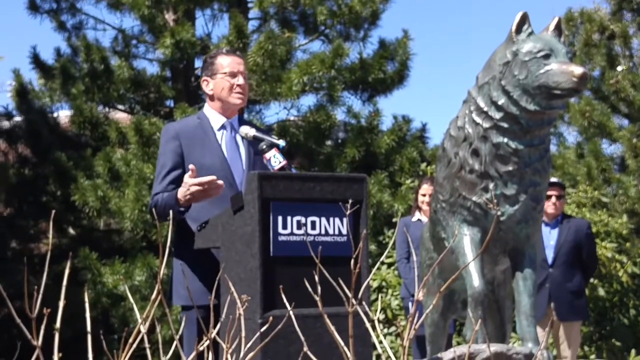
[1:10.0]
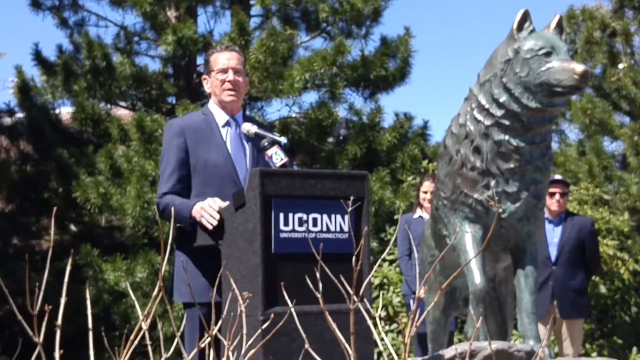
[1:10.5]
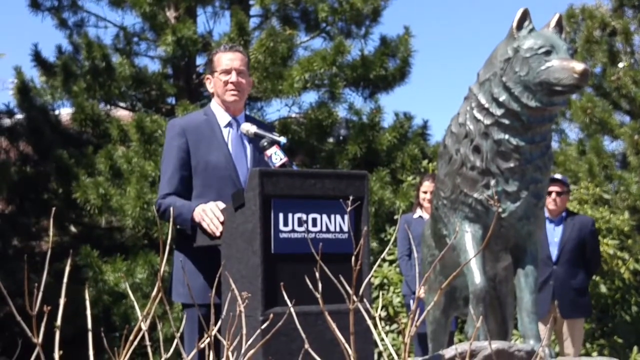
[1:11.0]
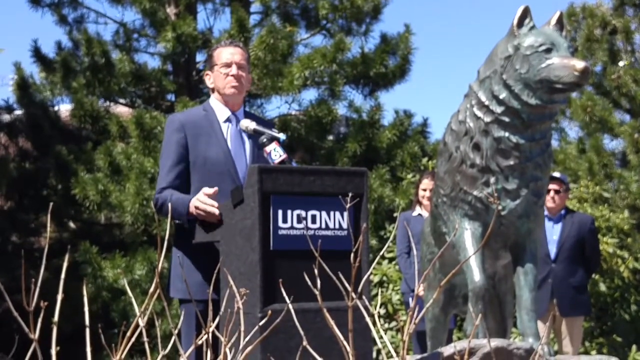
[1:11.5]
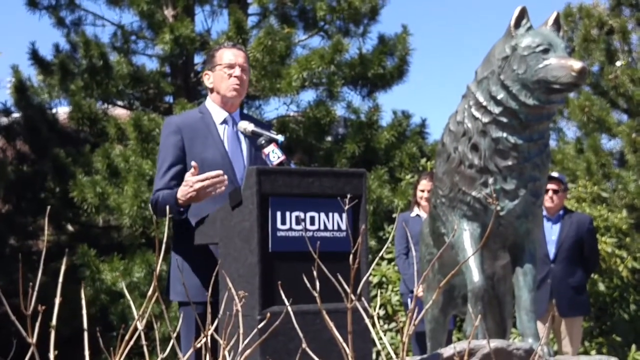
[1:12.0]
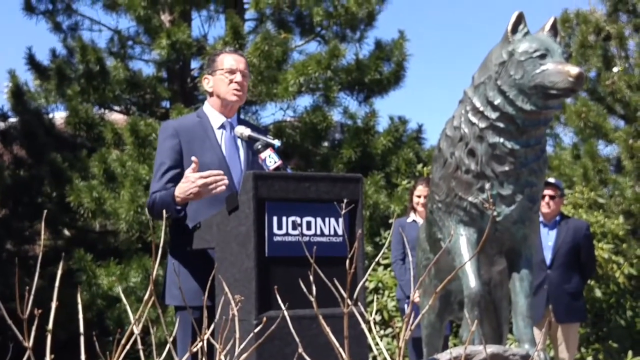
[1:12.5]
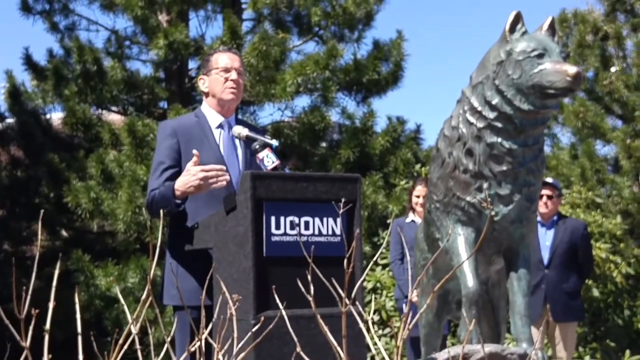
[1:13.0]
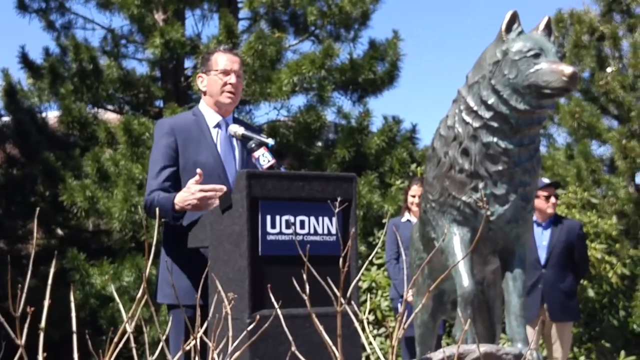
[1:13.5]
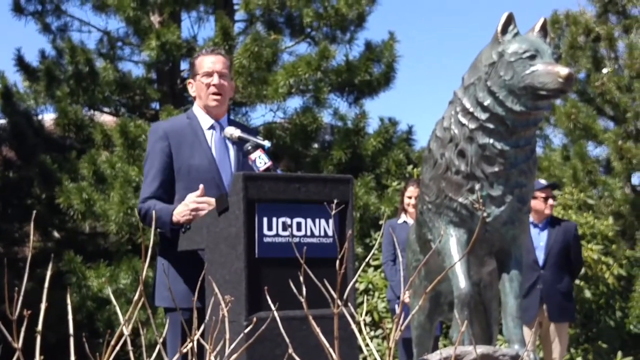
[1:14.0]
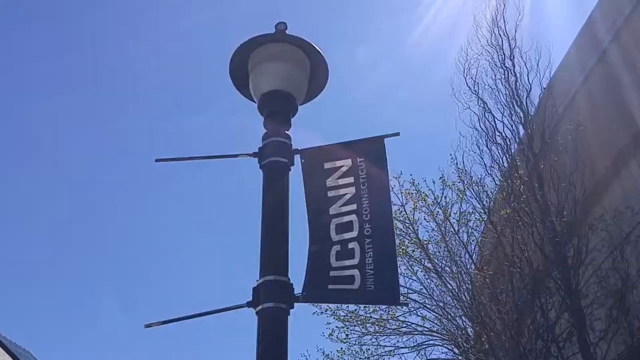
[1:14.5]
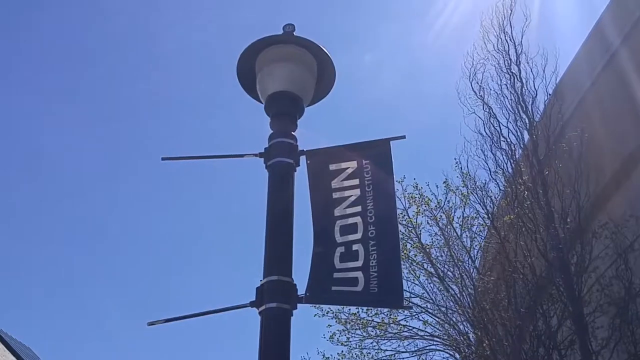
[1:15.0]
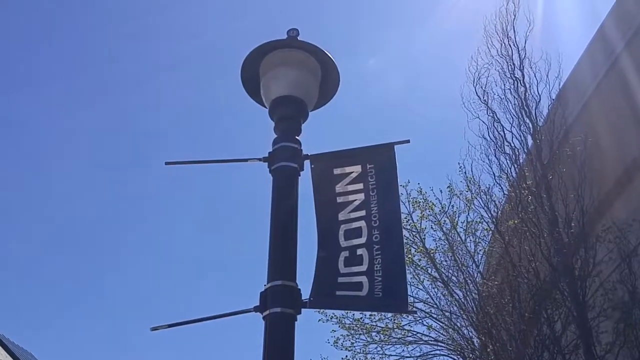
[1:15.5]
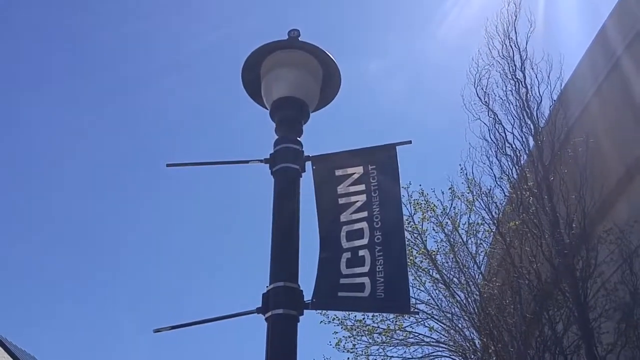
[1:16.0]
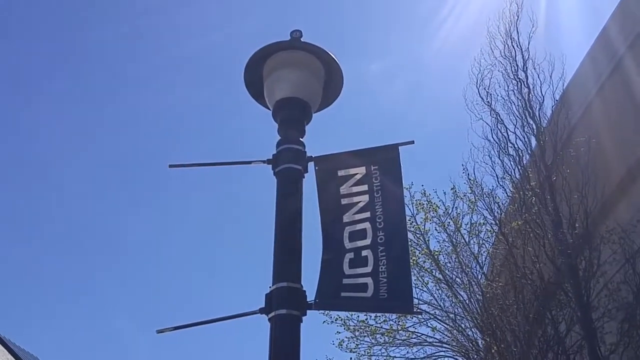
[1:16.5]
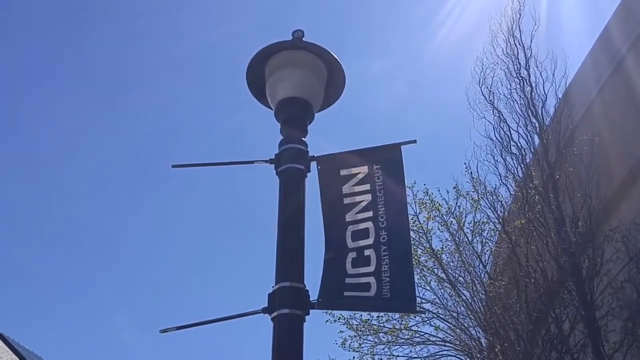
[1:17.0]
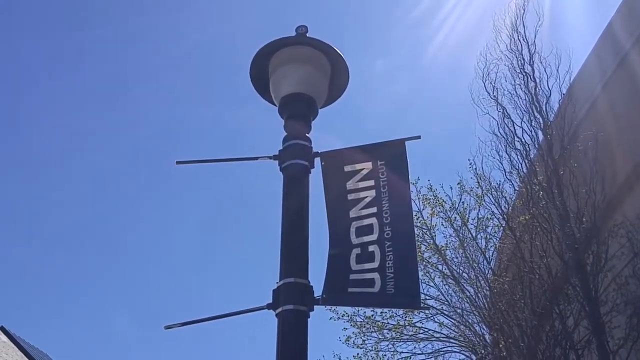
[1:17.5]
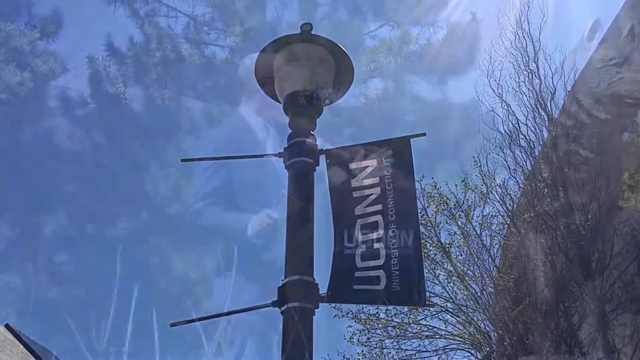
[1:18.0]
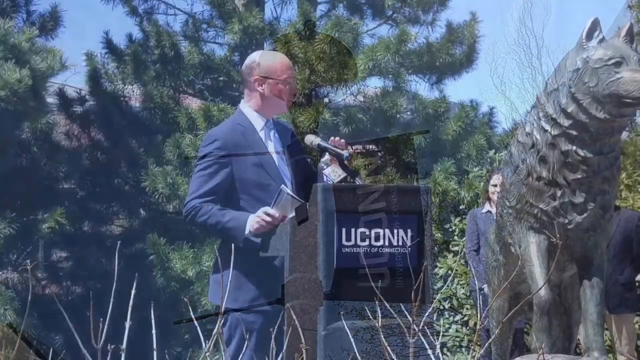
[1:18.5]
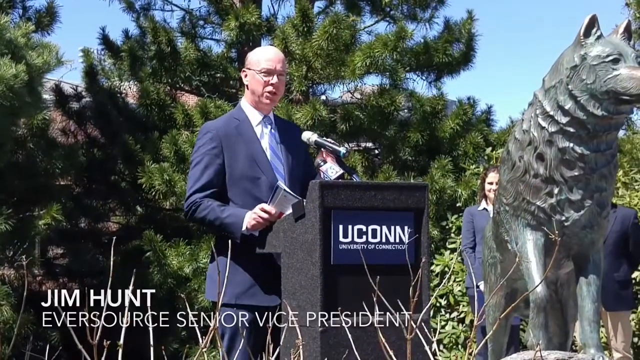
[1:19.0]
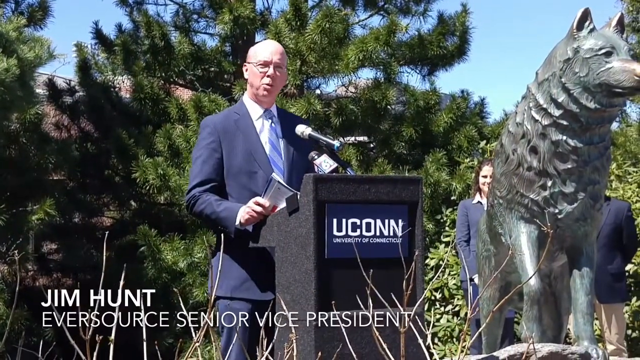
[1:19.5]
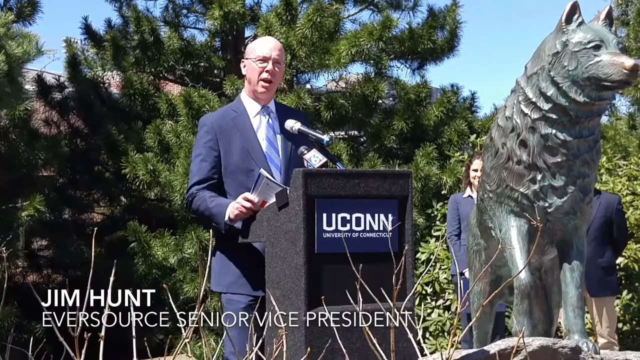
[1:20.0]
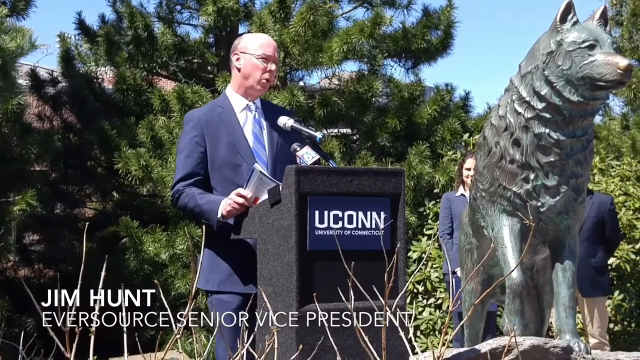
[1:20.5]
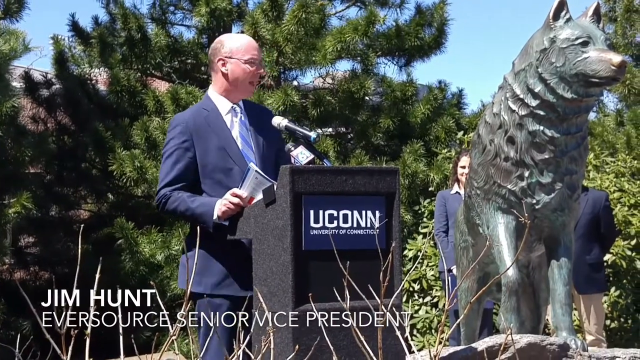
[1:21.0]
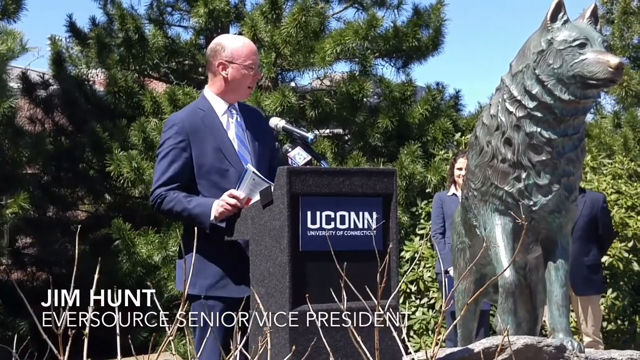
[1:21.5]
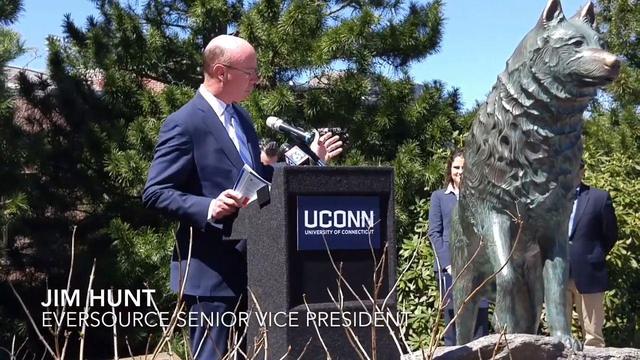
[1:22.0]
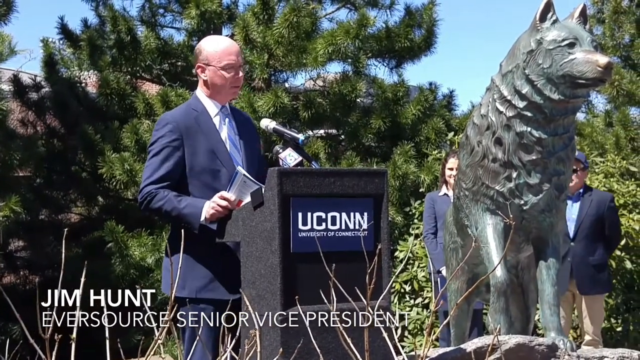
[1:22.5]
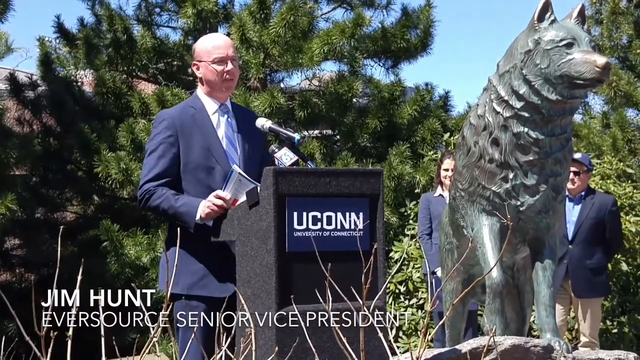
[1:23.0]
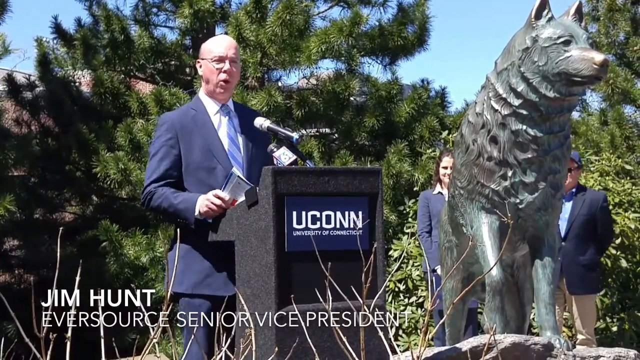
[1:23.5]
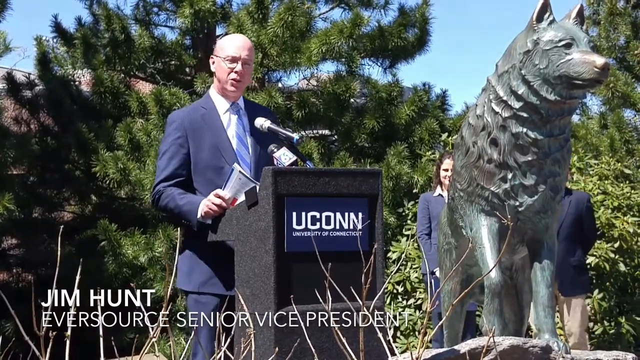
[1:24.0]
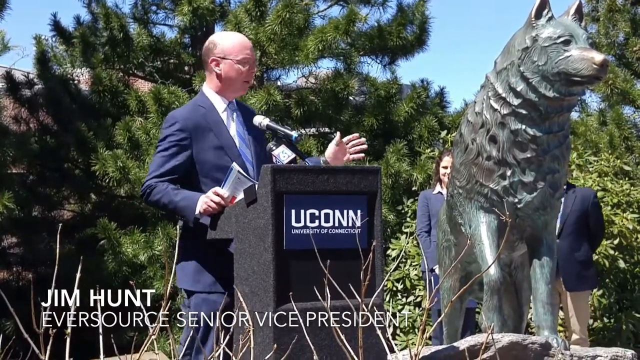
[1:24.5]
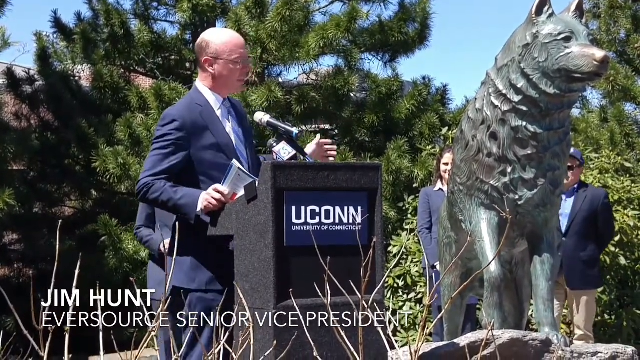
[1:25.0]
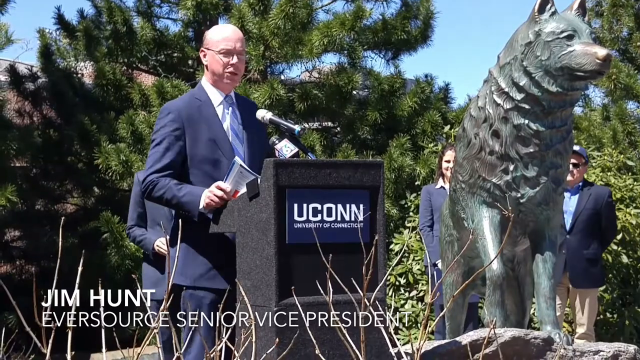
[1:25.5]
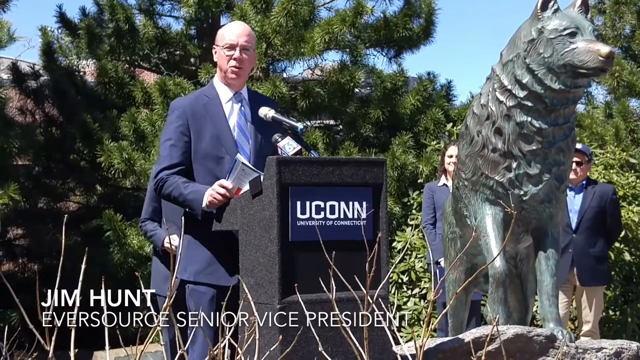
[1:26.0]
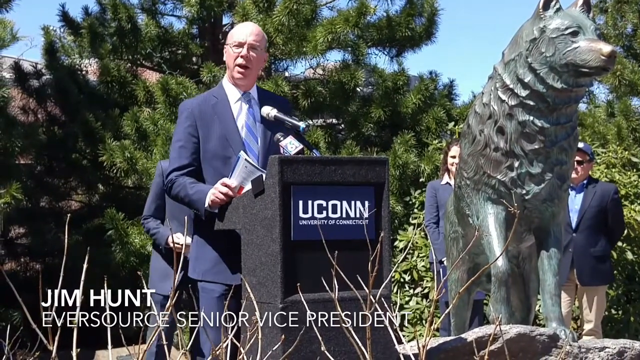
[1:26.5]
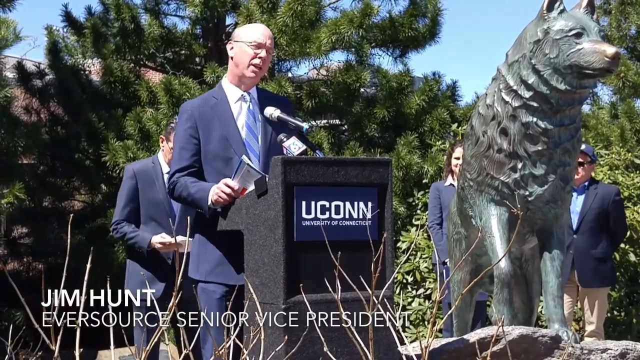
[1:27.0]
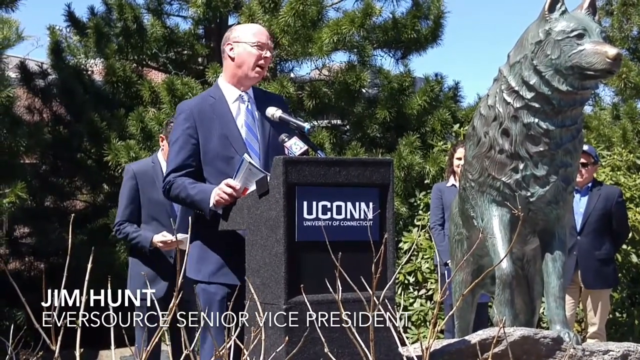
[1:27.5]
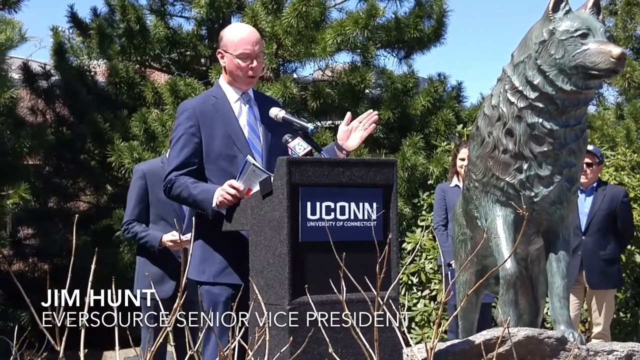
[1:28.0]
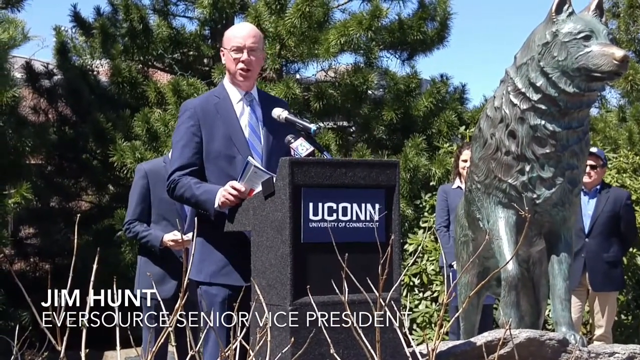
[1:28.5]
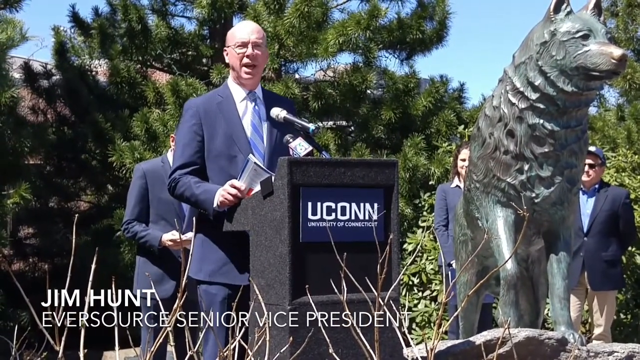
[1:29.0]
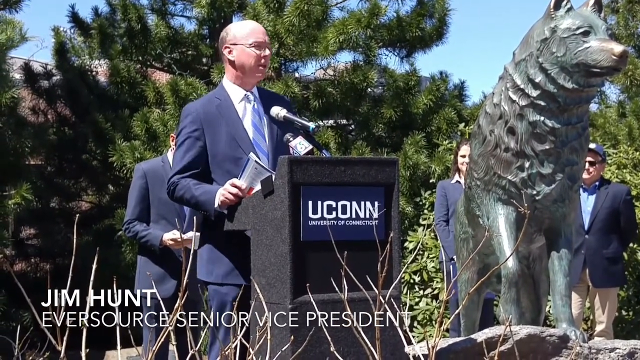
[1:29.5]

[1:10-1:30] The governor of Connecticut is still speaking at the podium at the University of Connecticut on the early spring day. After him, Jim Hunt, Eversource Senior Vice President, speaks in front of the fir pine trees. The only text shown is his name and role. Earth Day volunteers are present.